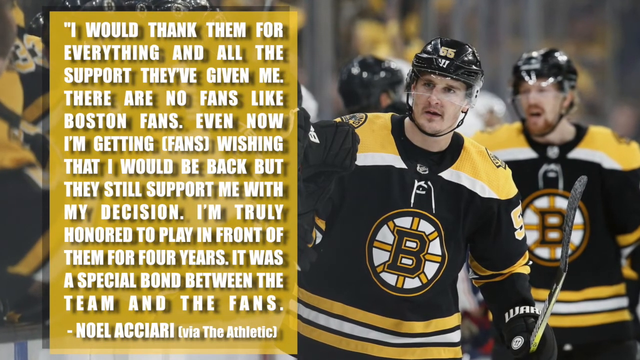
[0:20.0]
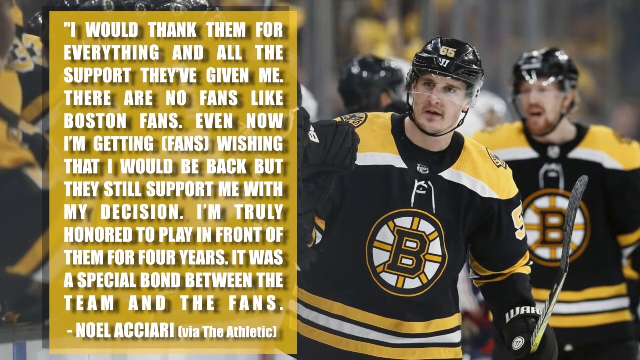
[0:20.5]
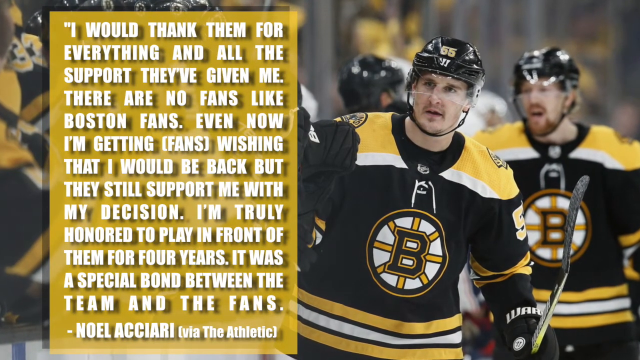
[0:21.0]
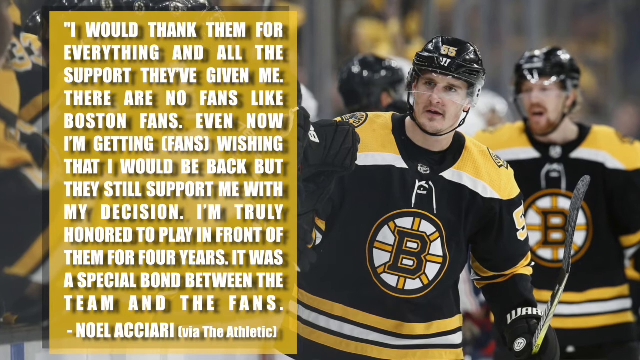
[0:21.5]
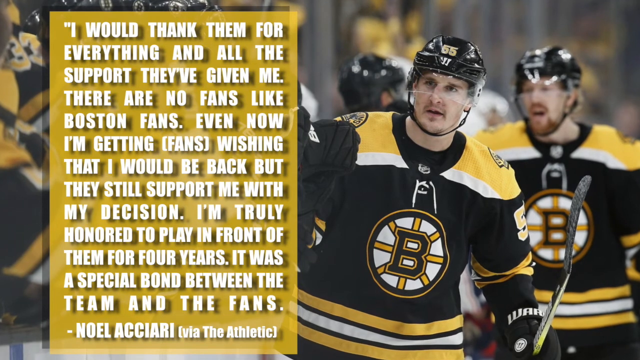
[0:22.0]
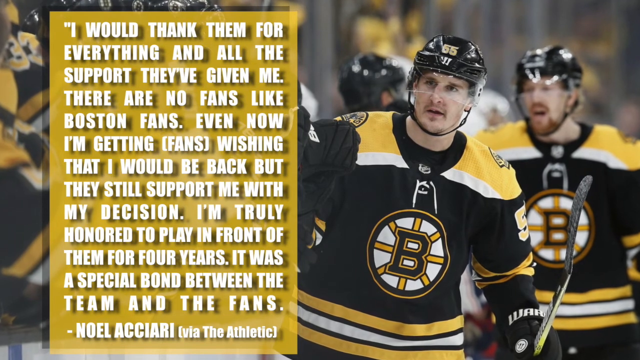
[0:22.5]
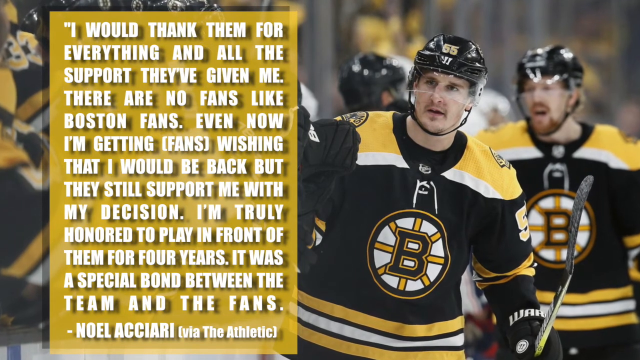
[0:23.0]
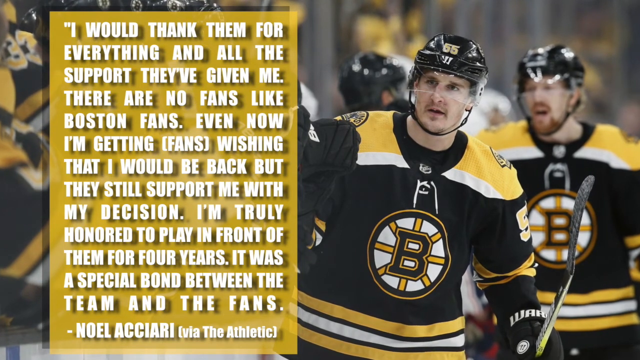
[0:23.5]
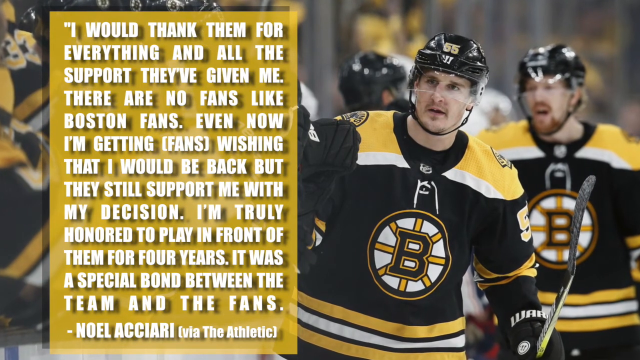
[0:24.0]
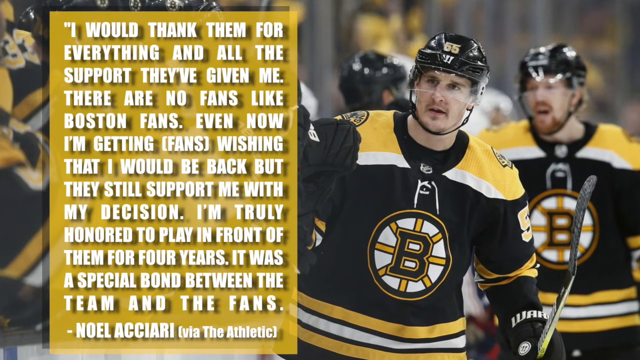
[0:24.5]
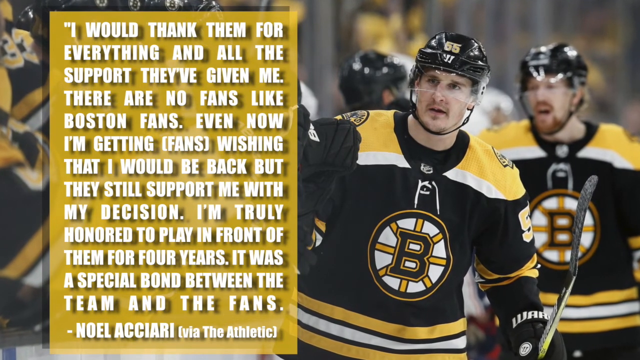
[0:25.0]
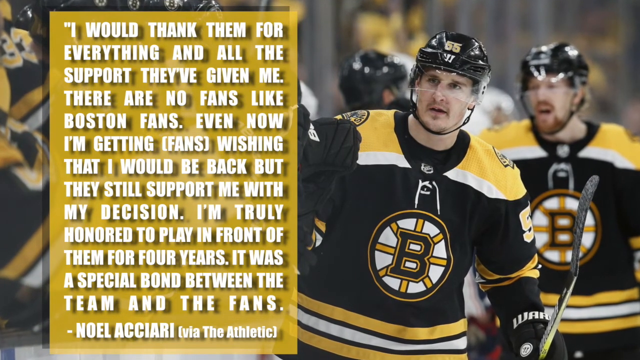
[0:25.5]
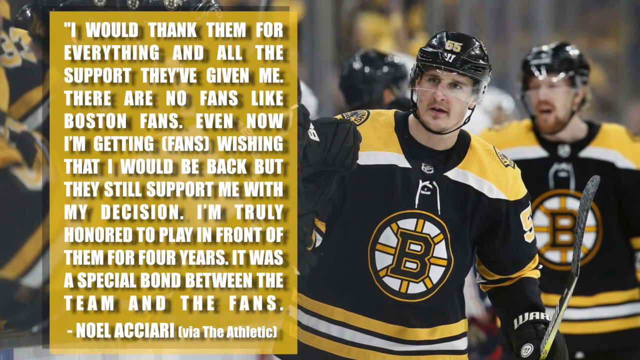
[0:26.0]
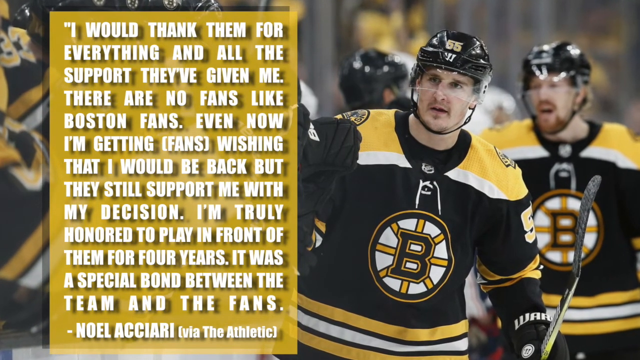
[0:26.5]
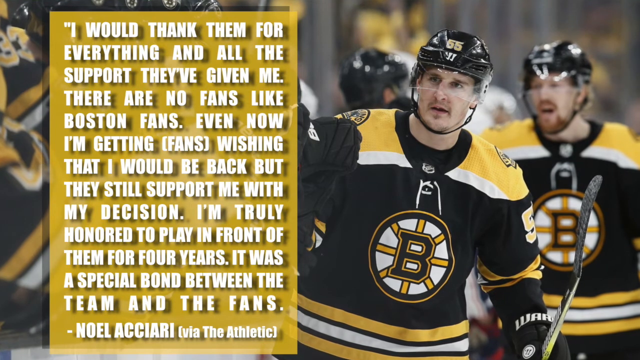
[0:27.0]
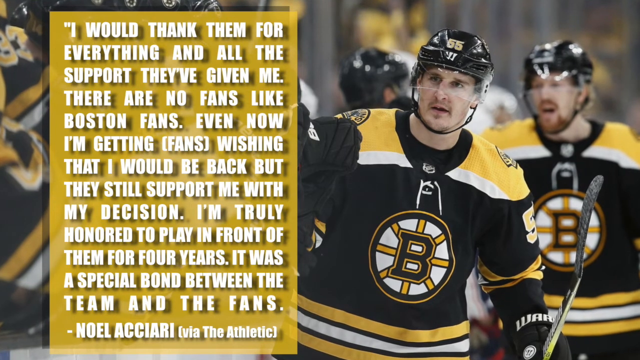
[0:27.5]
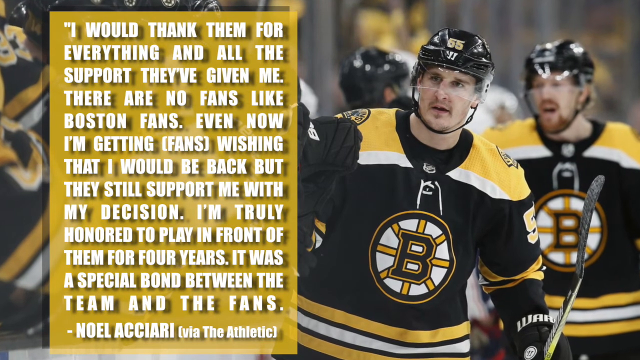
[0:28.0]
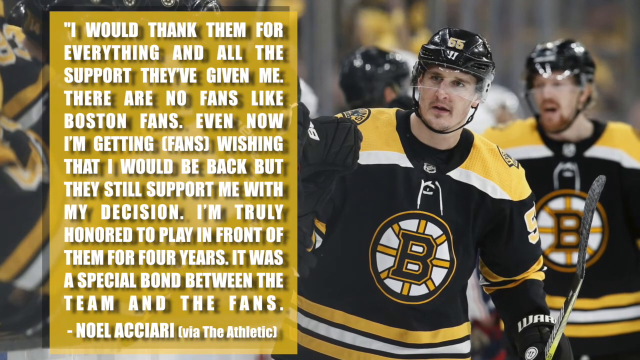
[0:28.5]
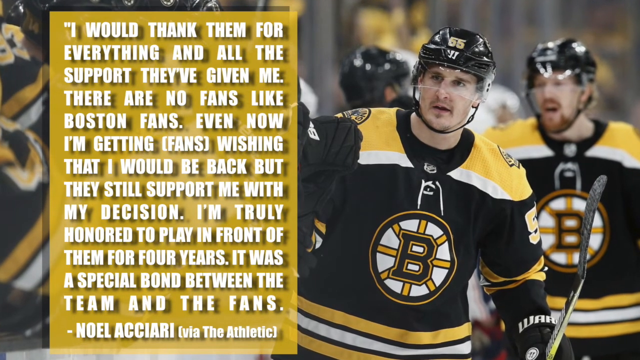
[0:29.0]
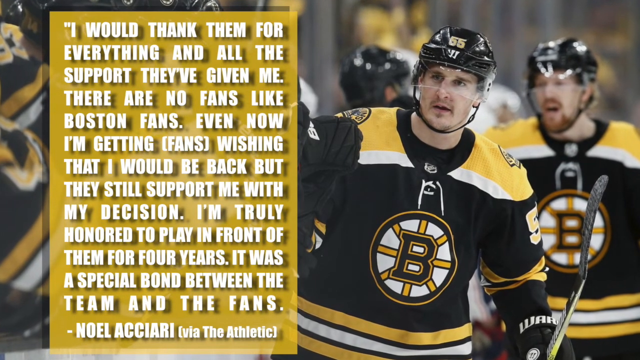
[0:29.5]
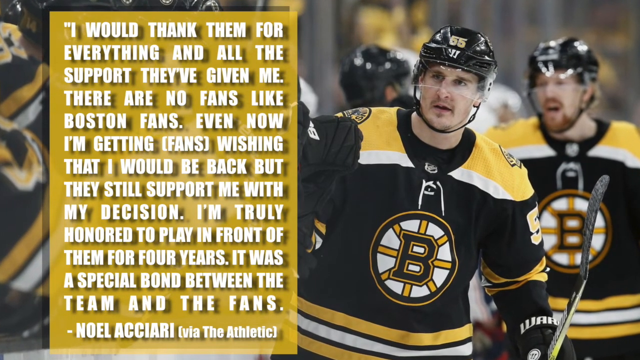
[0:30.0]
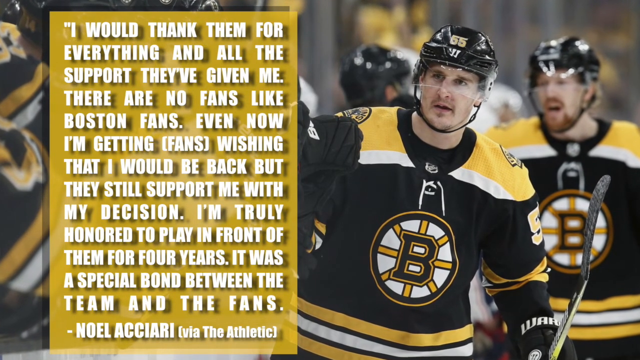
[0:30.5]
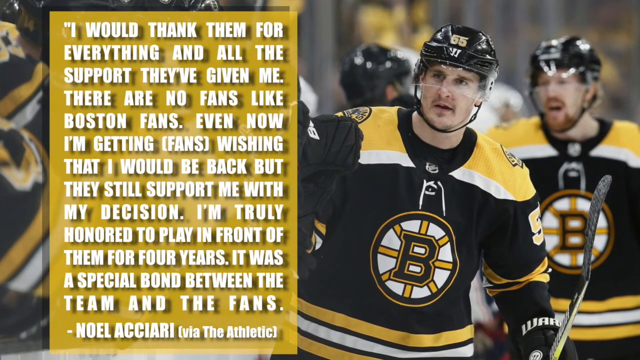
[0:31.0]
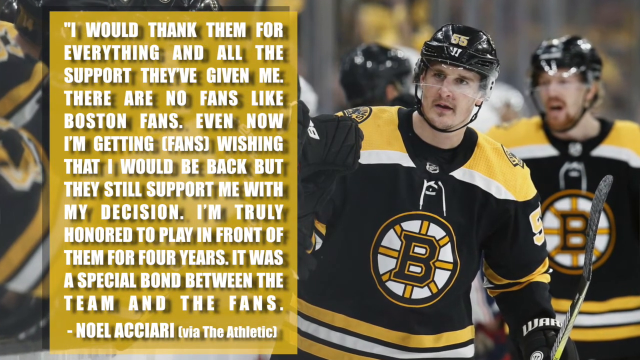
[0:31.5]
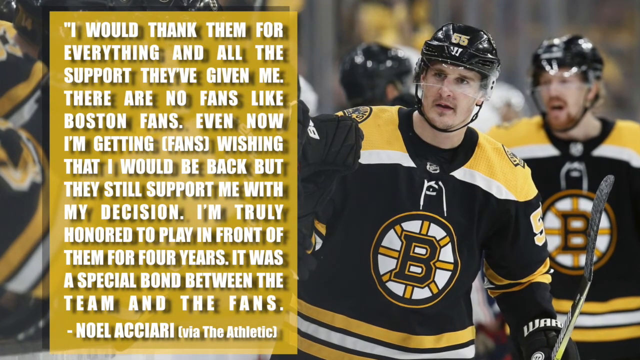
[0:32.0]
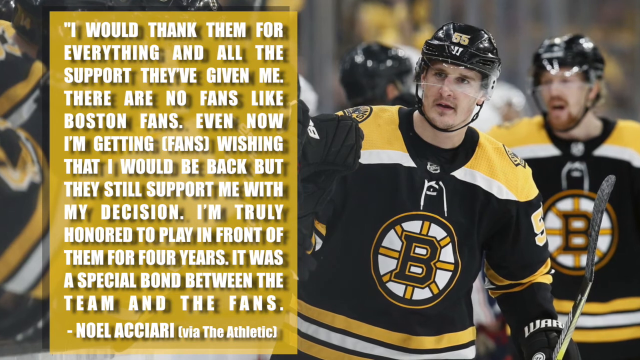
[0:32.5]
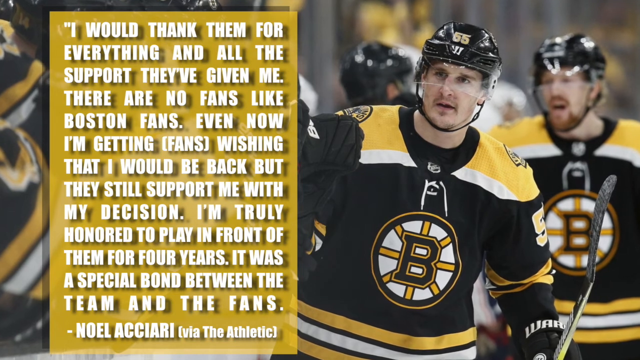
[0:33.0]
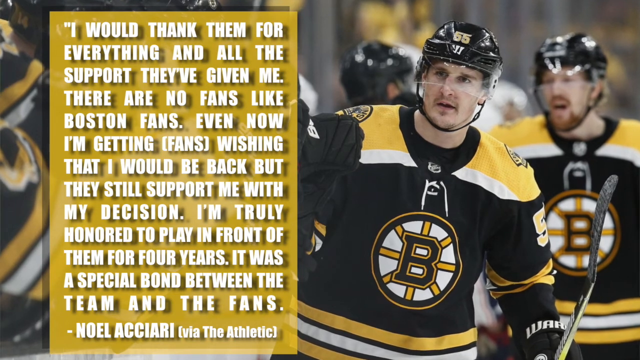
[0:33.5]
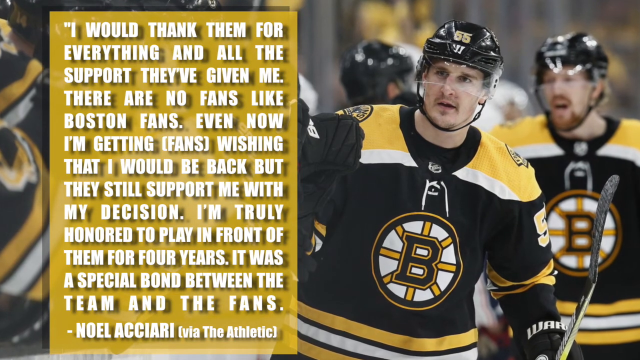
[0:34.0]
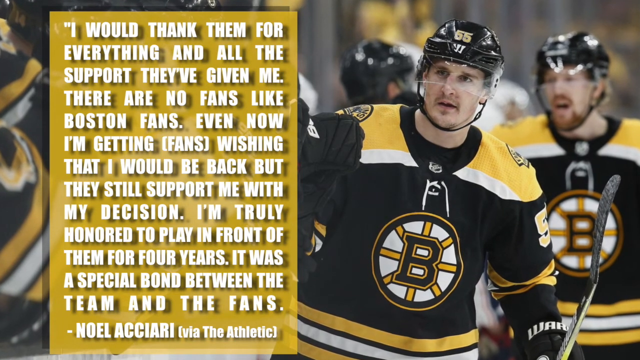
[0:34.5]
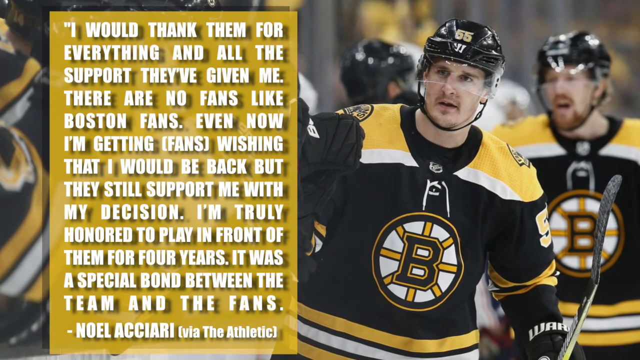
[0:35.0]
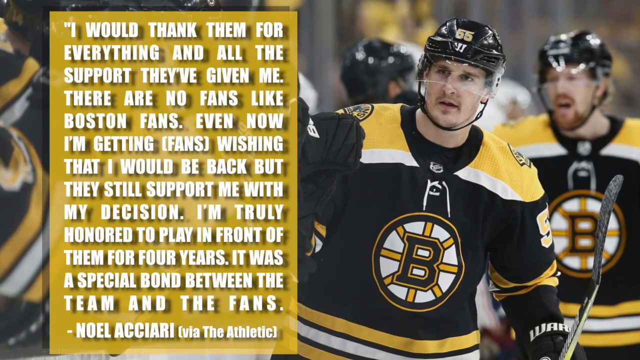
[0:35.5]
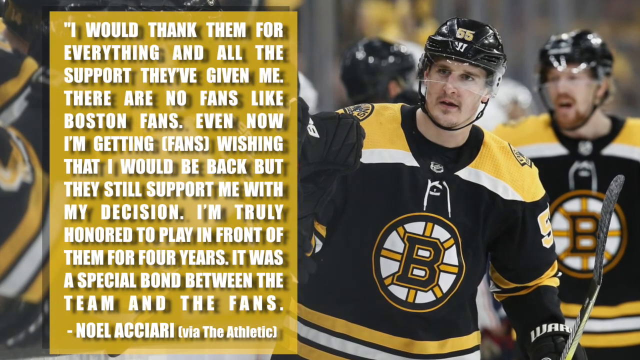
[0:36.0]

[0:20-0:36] A quote by Noelle Asciardi via The Atlantic is shown, reading: "I would thank them for everything and all the support they've given me. There are no fans like Boston fans. Even now, I'm getting fans wishing that I would be back. But they still support me with my decision. I'm truly honored to play in front of them for four years. It was a special bond between the team and the fans." The video lingers on the quote, which is displayed over a still image of the player, Noelle Asciardi, in his Boston hockey uniform along with his teammates. He looks on, holding a hockey stick in one hand, with his helmet on in front of his face; the helmet bears the number 55. His teammates look on with surprised expressions, perhaps tired.